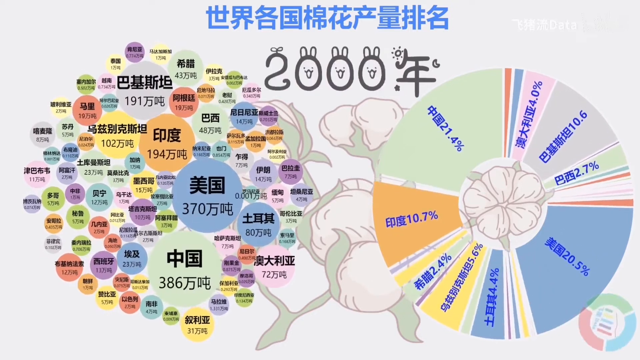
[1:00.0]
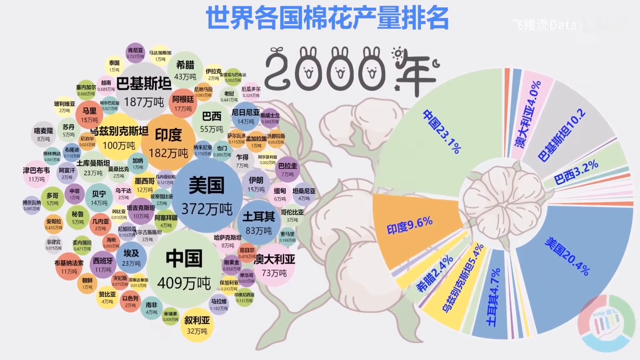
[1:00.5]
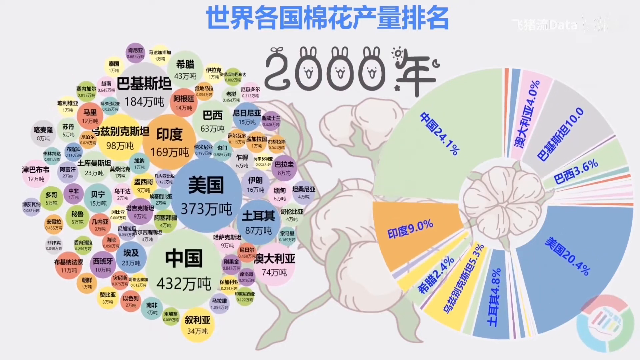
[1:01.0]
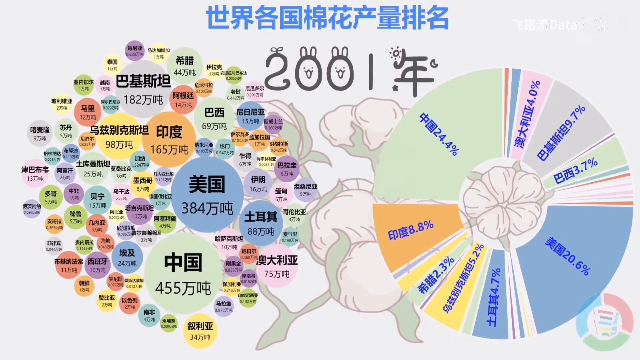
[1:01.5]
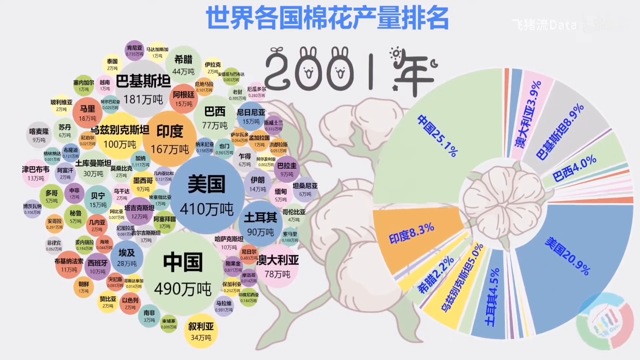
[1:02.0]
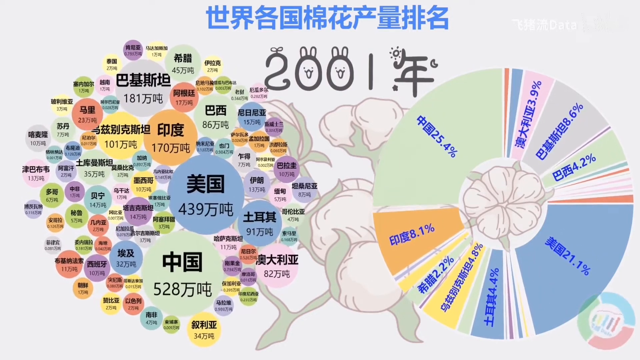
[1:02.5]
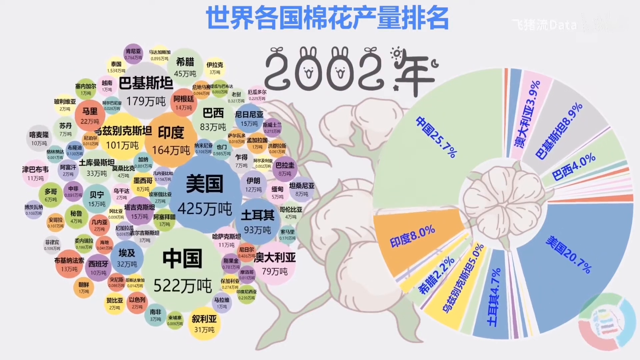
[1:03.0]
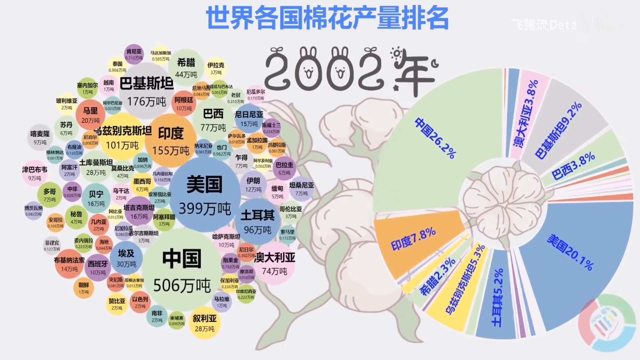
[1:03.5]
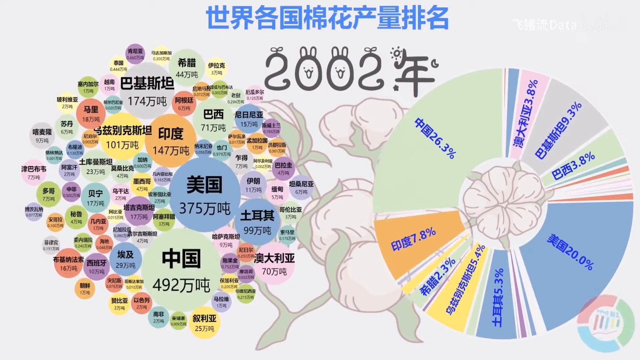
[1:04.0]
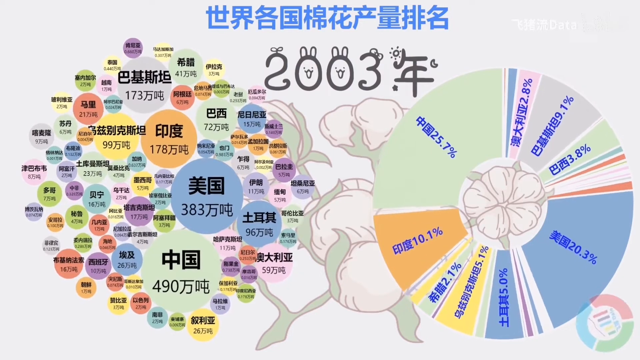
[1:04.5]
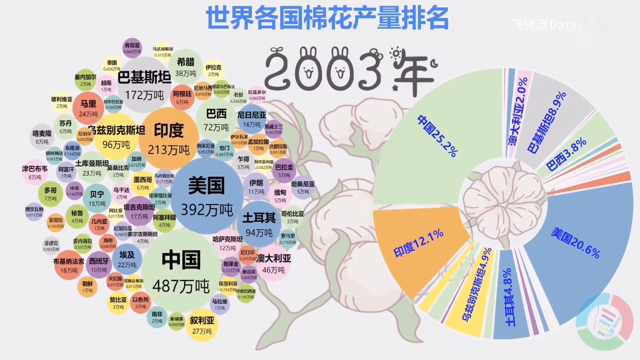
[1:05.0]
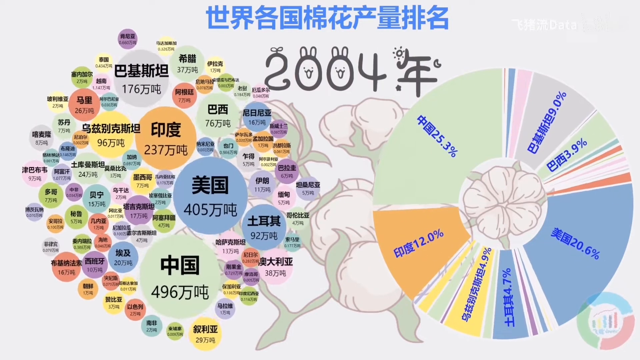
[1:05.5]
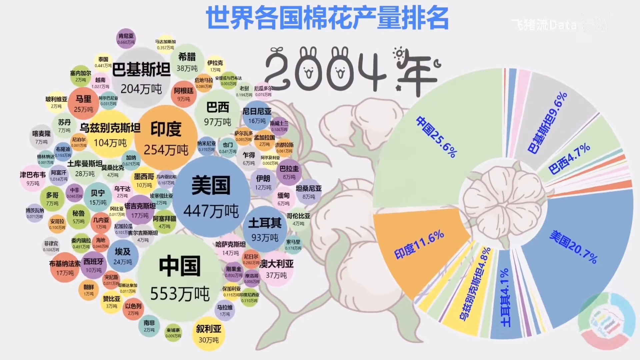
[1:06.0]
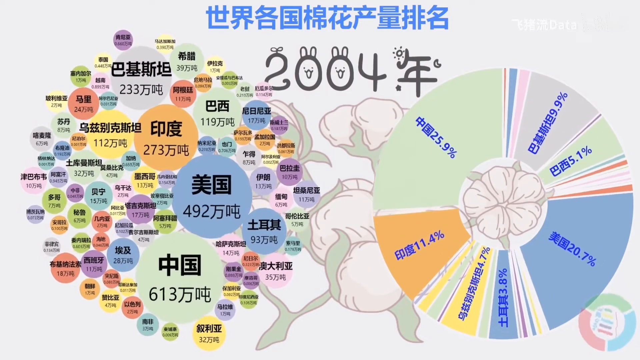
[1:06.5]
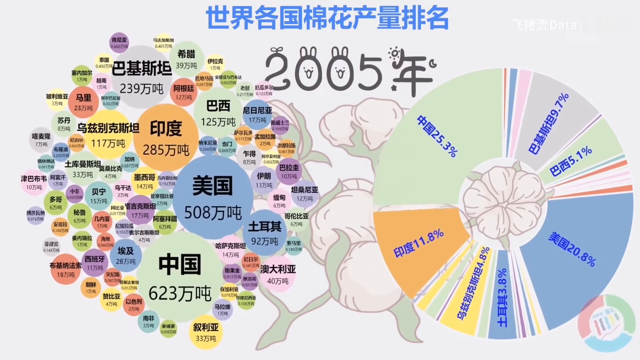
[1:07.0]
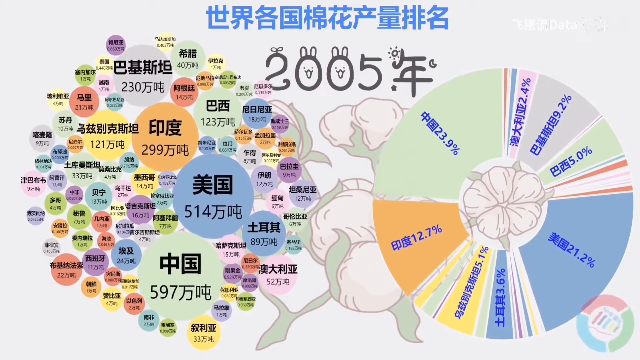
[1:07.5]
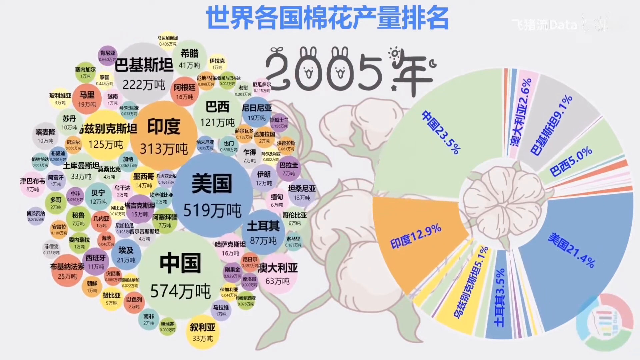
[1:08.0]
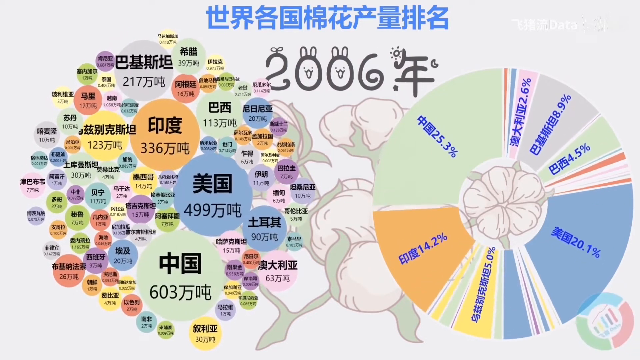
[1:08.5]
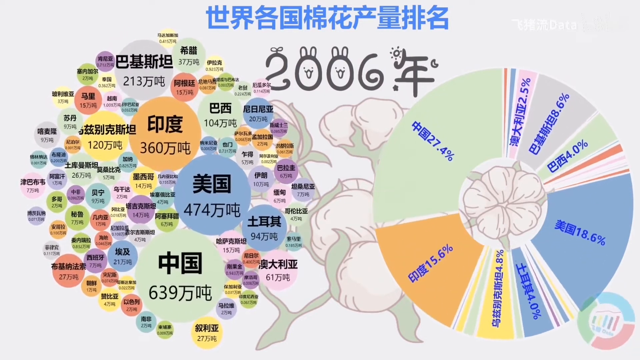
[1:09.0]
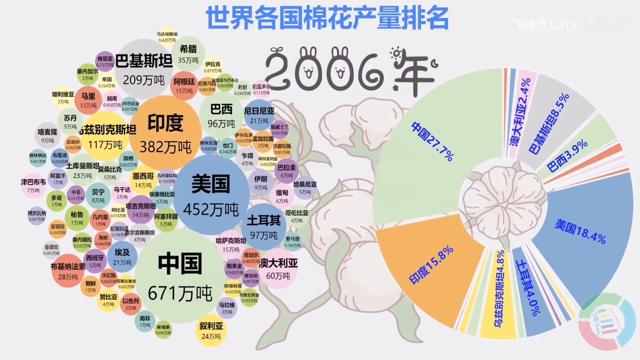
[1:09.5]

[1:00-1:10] Two circular charts are animated, one on the left and one on the right, showing cotton output in different countries around the world. The charts change as the year changes: U.S. output stabilizes at around 20% from 2002 to 2004, then declines again in 2006 and 2007, while China's share goes from 26% to 30% by 2007, a small increase. Each country in the pie chart keeps the same color across the time periods. The charts show that China has produced more cotton than the U.S. since the 1990s.